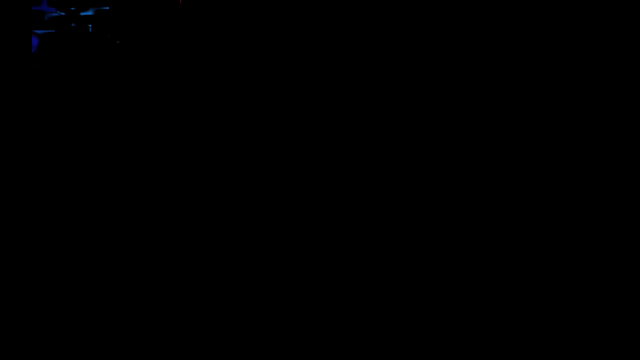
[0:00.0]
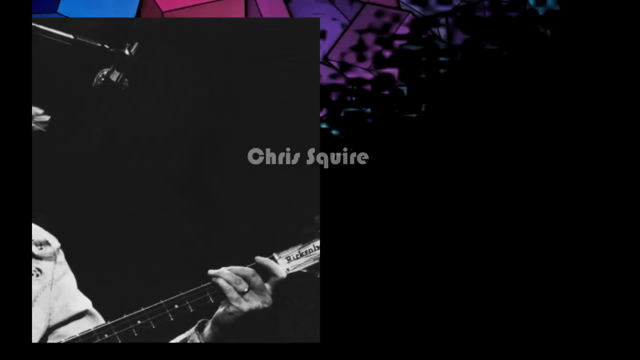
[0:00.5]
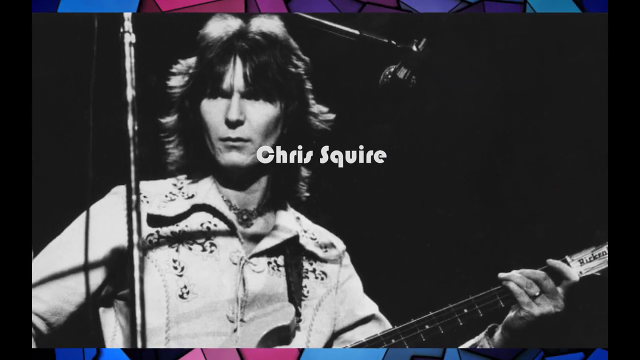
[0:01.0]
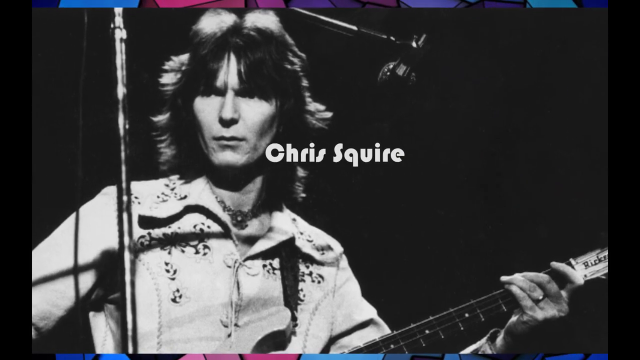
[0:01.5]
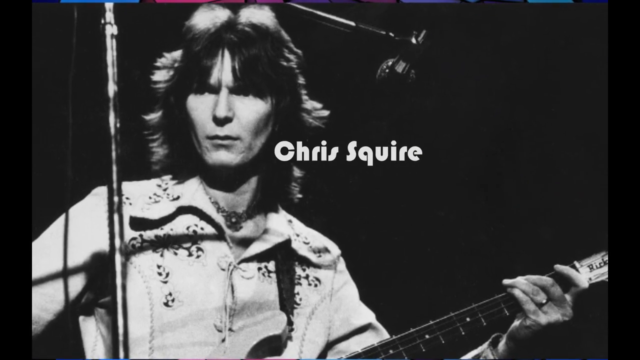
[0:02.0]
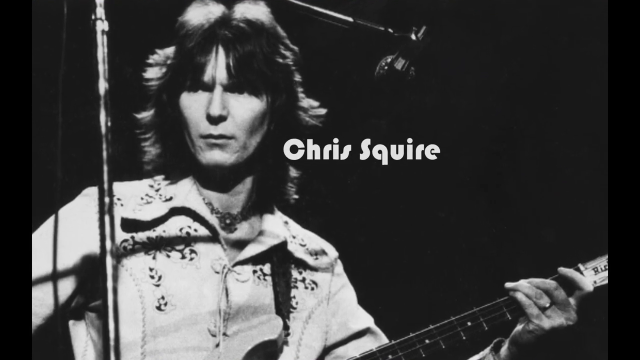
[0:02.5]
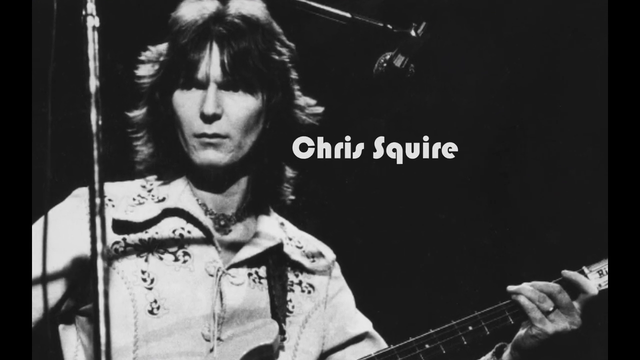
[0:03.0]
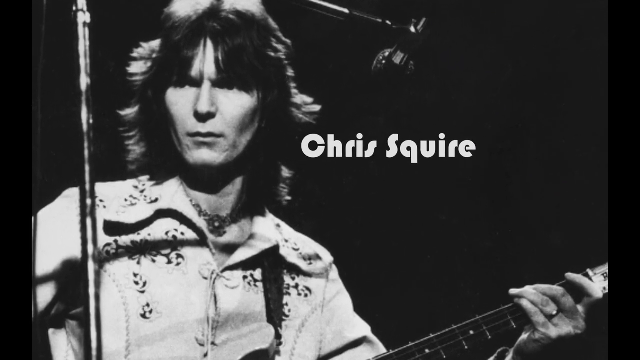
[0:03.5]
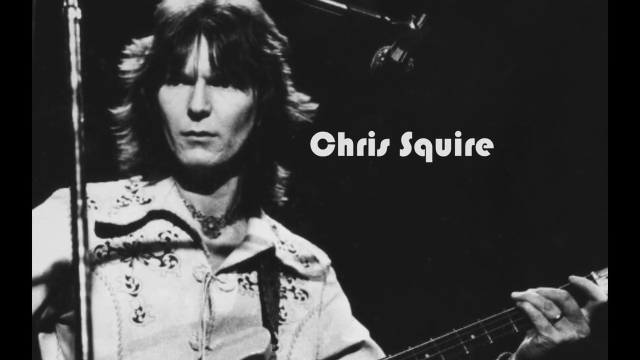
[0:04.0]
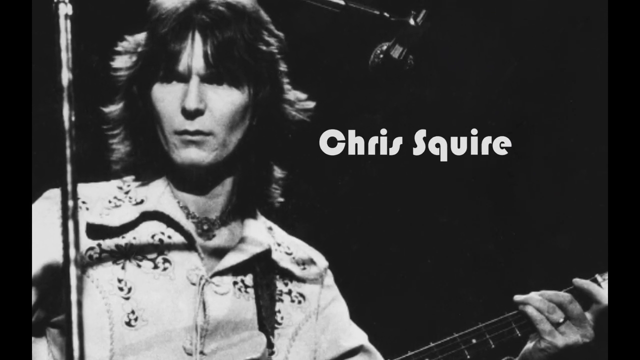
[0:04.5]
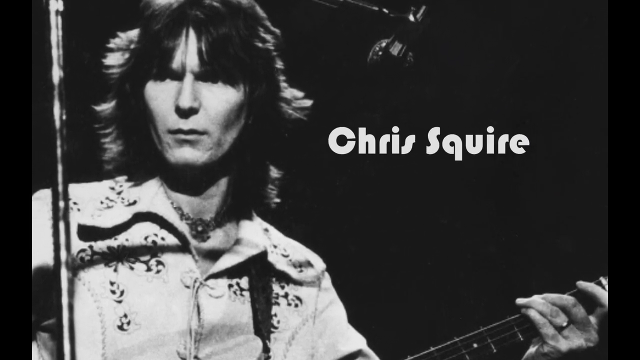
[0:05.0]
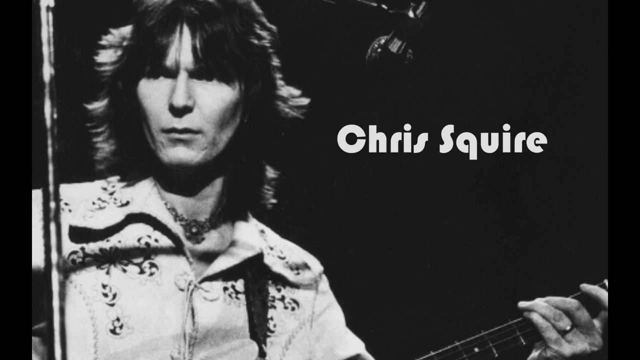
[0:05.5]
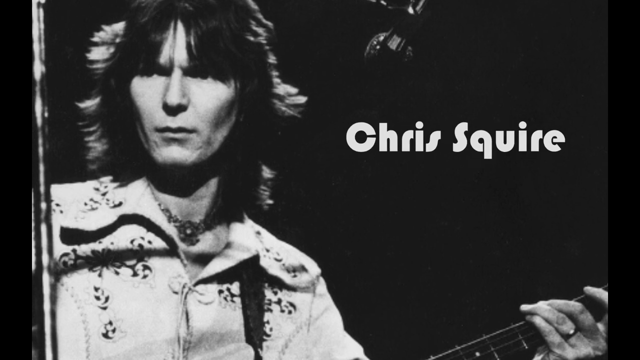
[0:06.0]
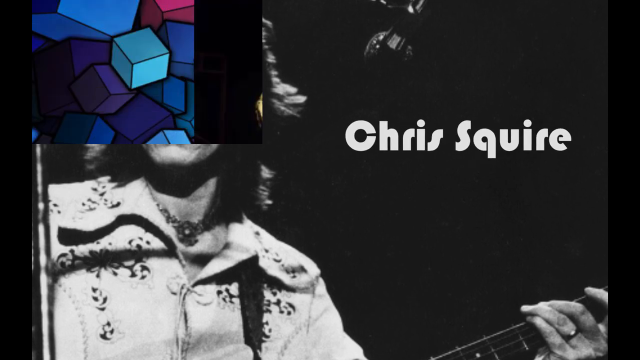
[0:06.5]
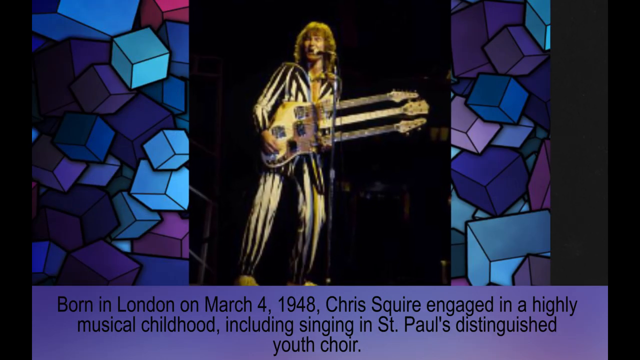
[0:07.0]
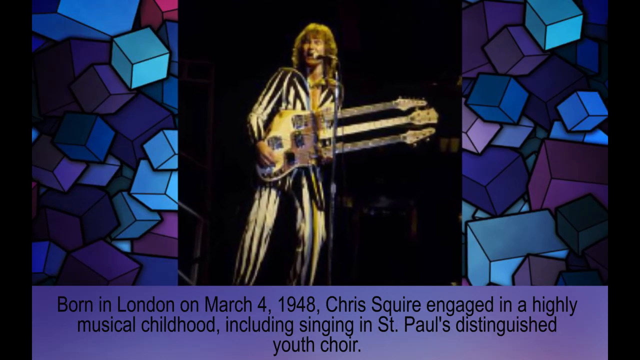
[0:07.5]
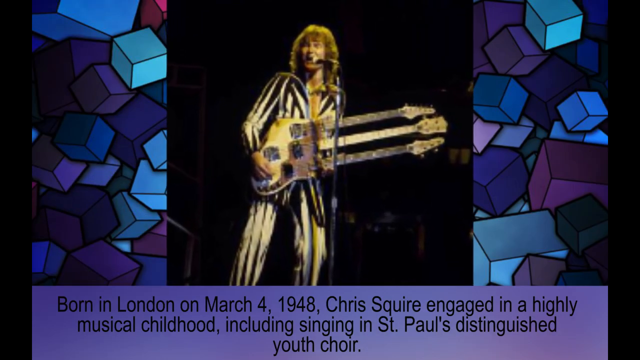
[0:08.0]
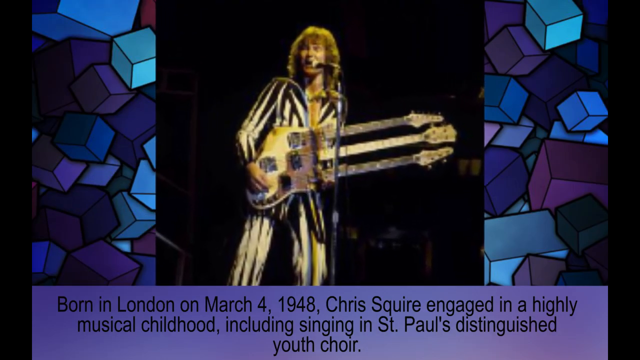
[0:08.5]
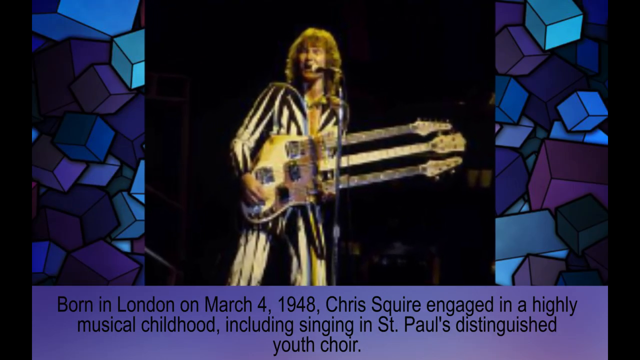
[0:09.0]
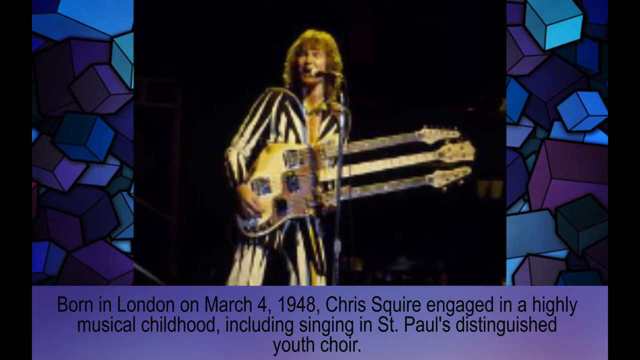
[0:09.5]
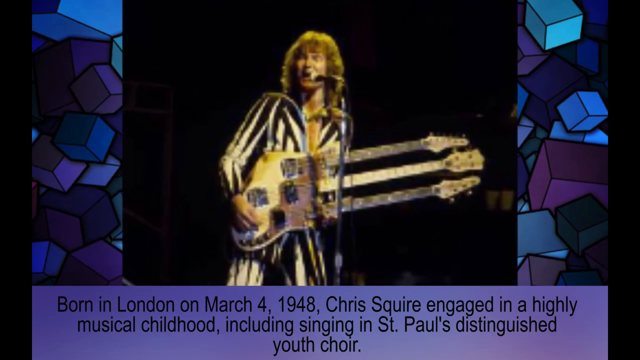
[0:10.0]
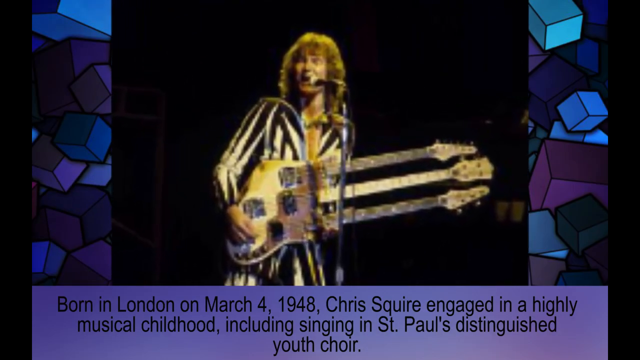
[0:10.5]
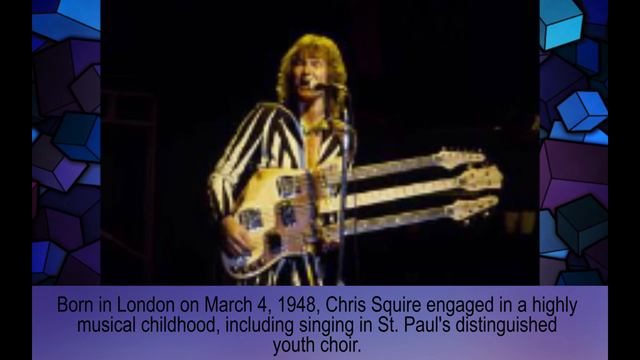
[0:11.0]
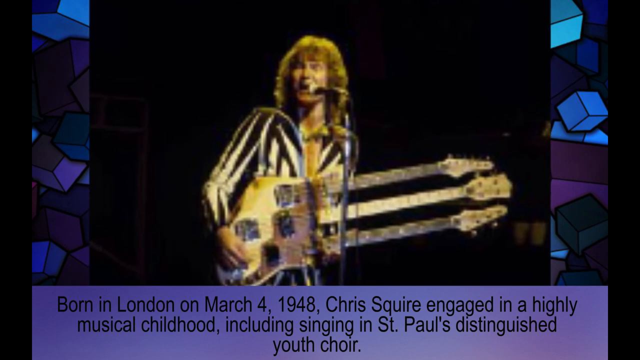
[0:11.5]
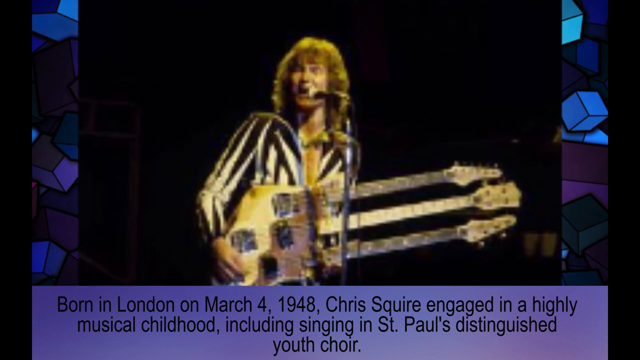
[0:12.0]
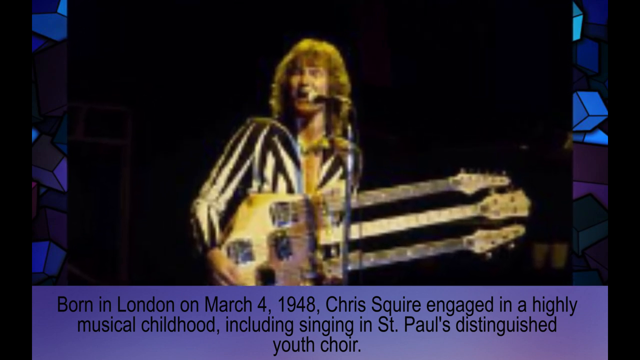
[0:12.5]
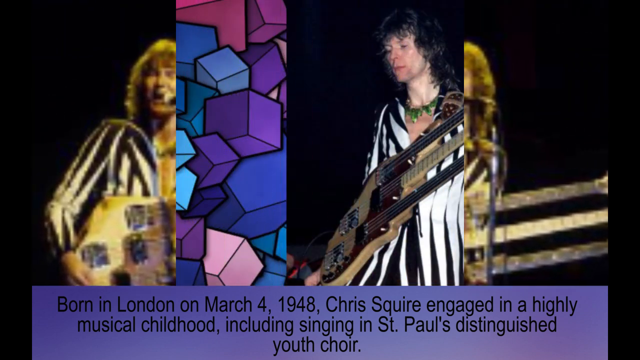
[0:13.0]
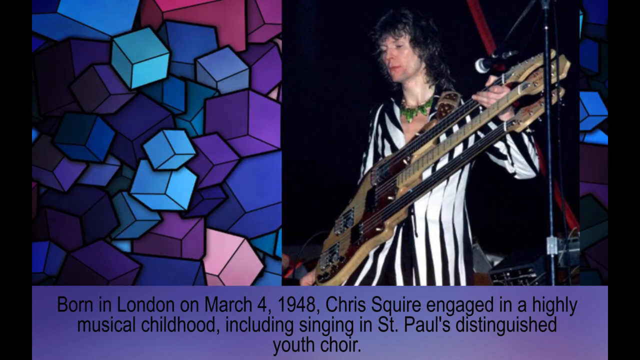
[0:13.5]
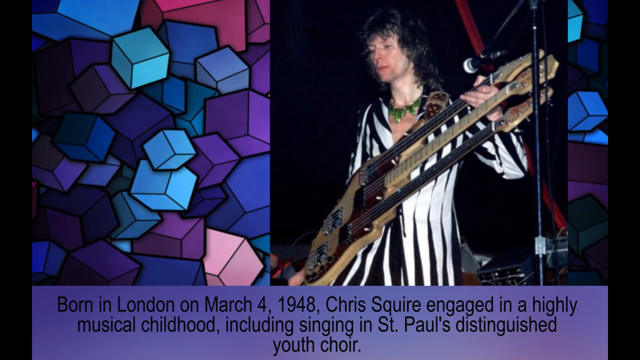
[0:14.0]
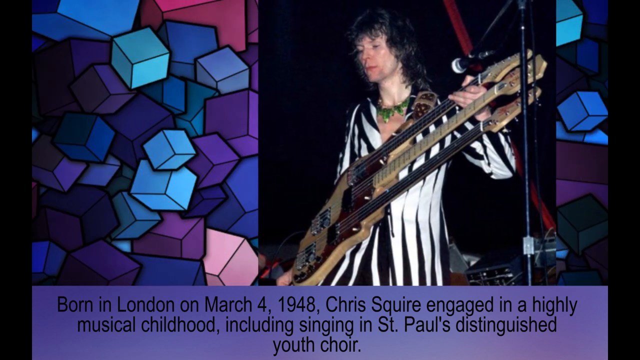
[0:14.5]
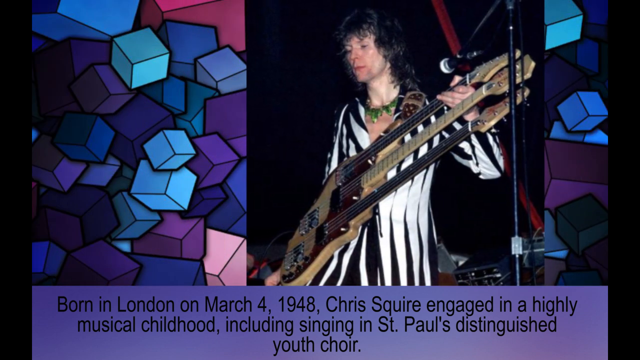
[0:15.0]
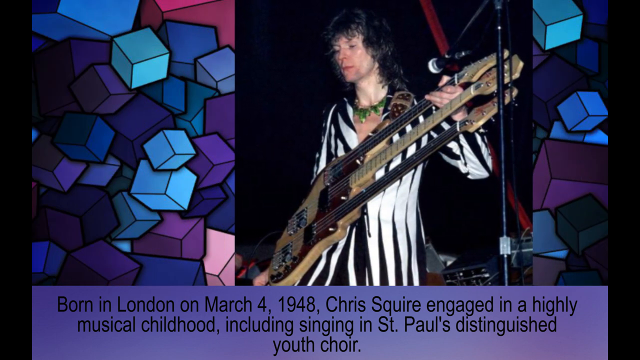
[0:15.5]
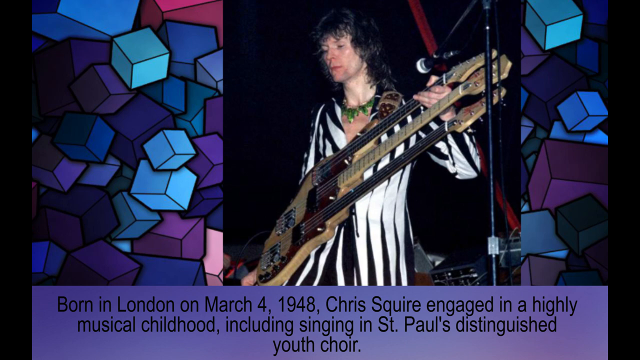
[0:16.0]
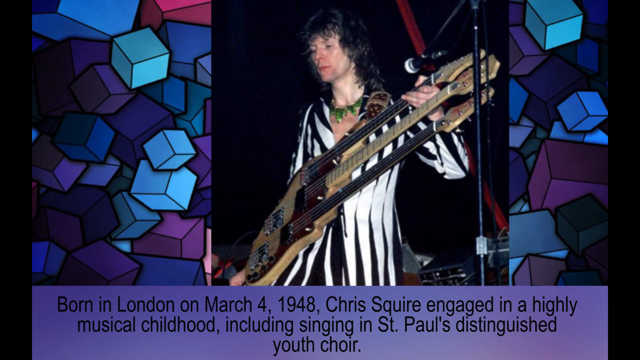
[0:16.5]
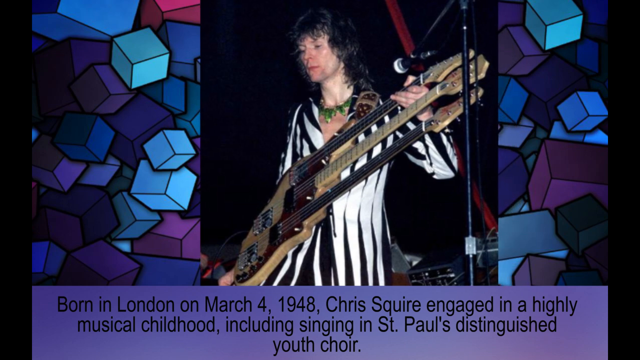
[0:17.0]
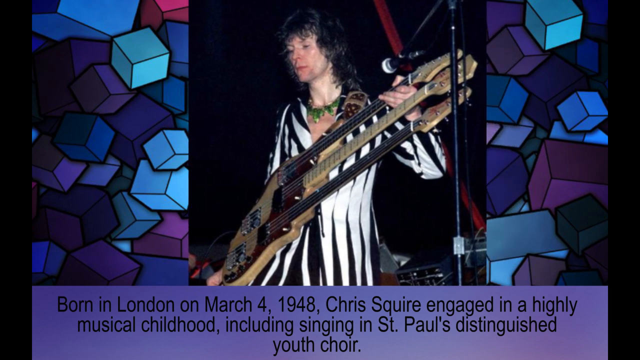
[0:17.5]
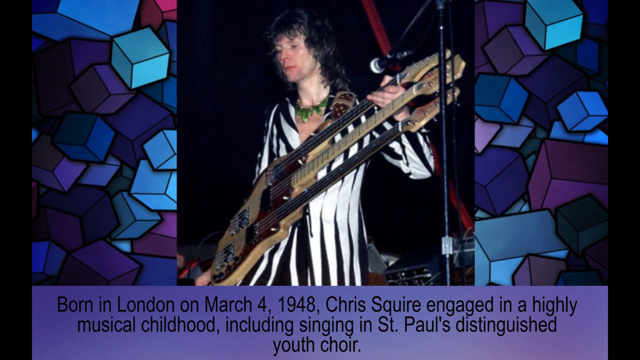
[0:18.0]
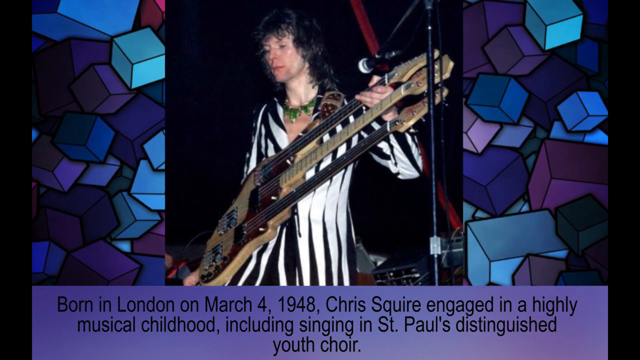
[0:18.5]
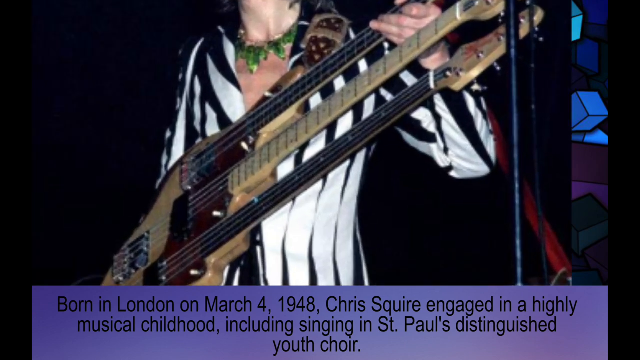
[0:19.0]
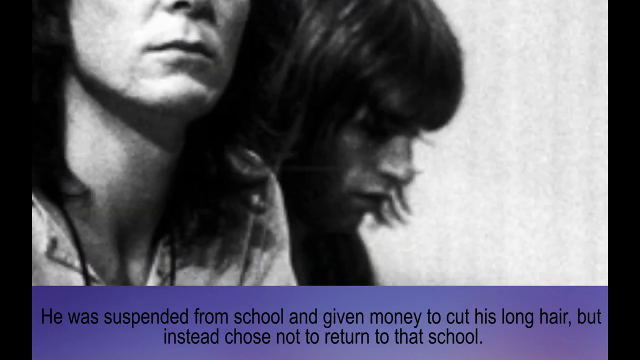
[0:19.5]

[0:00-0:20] A still image shows the musician Chris Squire standing on a stage, with on-screen text giving his name. He is playing several different guitar instruments, one of them a three-necked guitar. Text reads: "Born in London on March 4, 1948, Chris Squire engaged in a highly musical childhood, including singing in St. Paul's Distinguished Youth Choir." An image shows him on stage wearing a striped suit and holding a three-necked guitar. It changes to another image of him on stage holding the same three-necked guitar and wearing the same striped outfit. The final image is of Chris Squire apparently sitting in some type of waiting room, looking intently at the camera as his picture is taken.